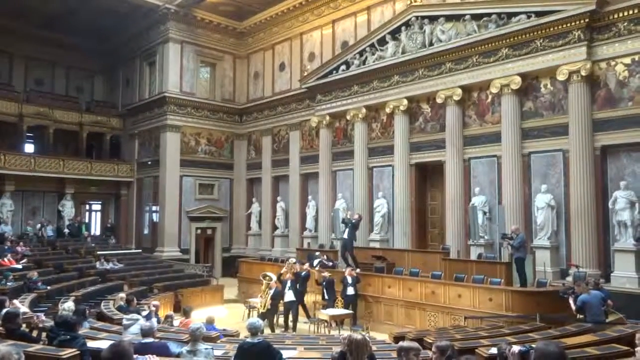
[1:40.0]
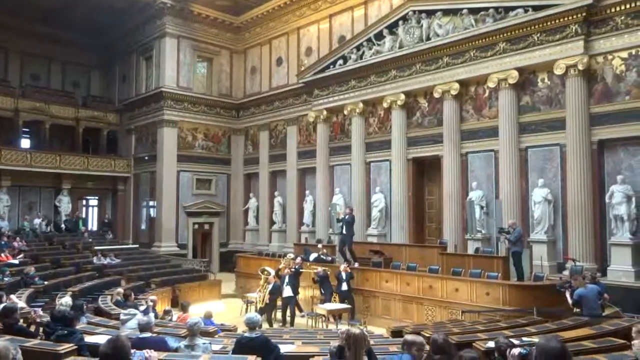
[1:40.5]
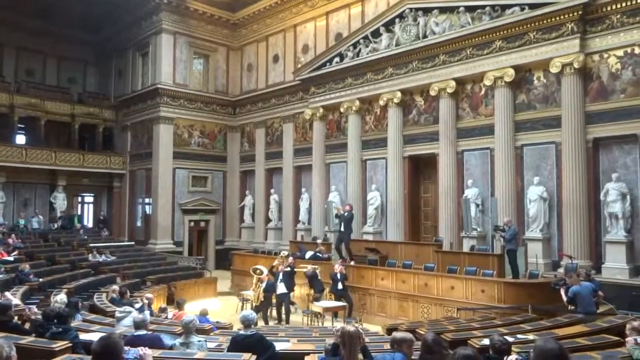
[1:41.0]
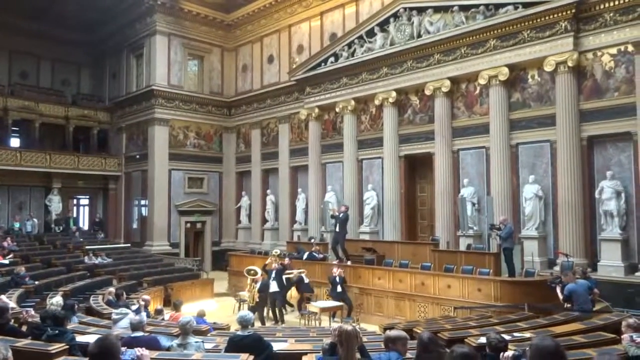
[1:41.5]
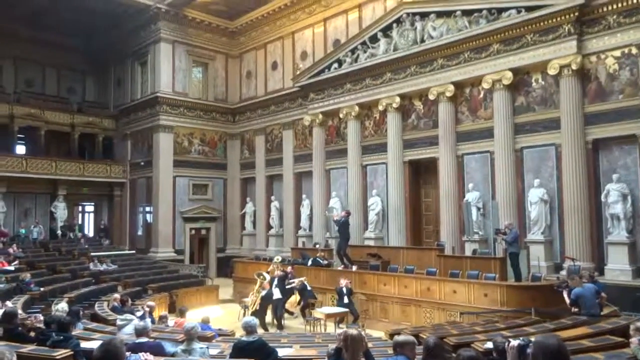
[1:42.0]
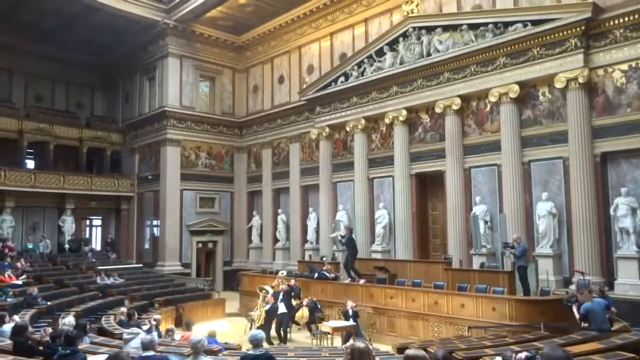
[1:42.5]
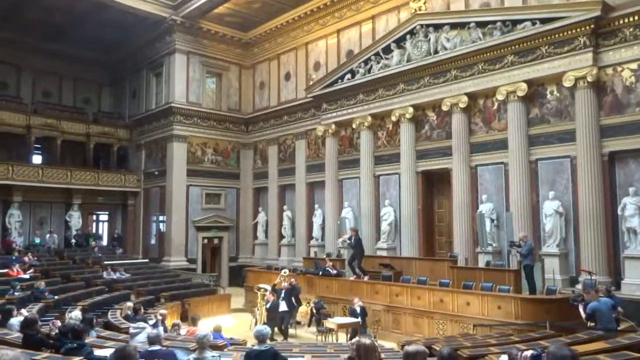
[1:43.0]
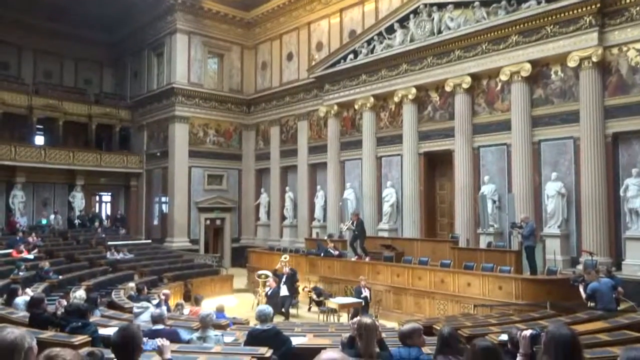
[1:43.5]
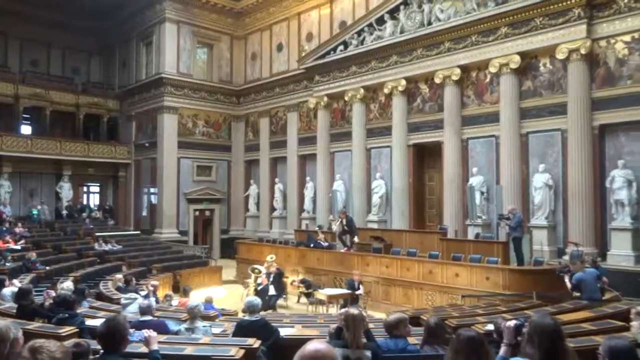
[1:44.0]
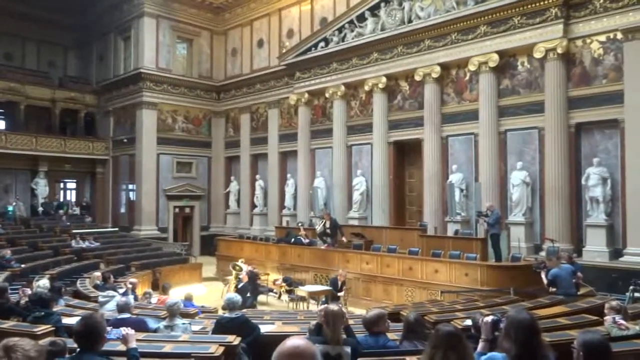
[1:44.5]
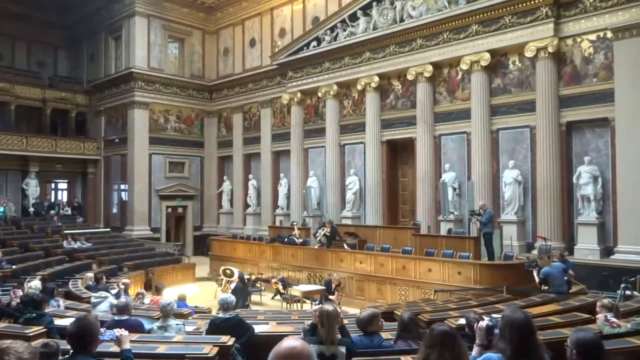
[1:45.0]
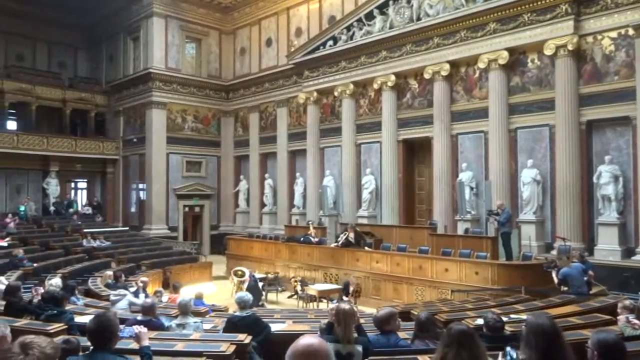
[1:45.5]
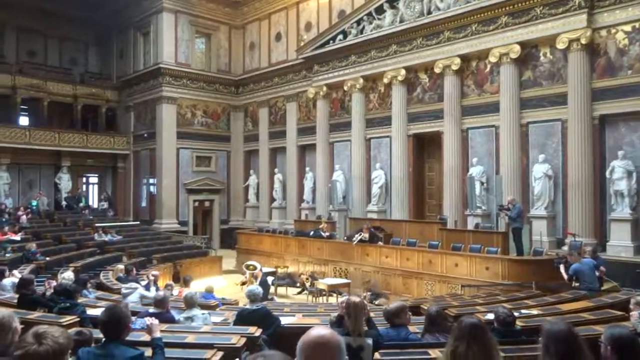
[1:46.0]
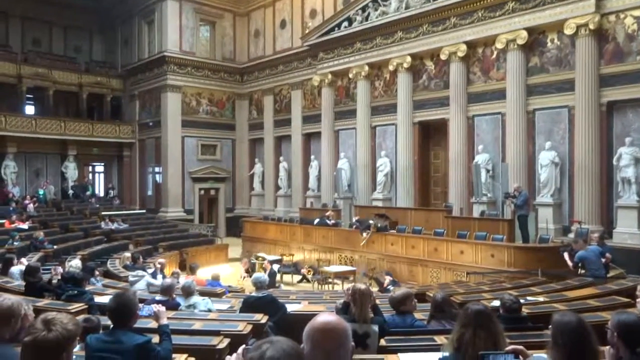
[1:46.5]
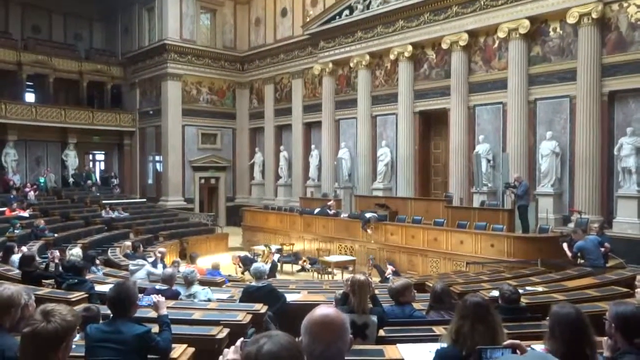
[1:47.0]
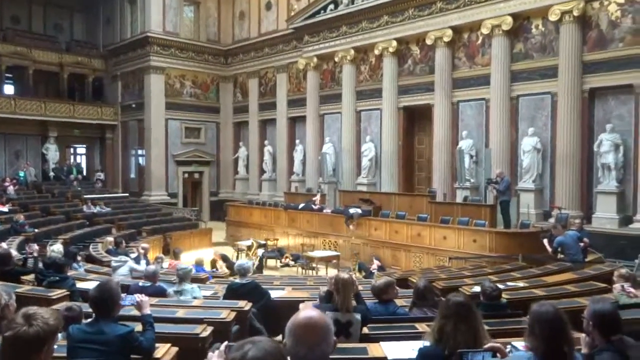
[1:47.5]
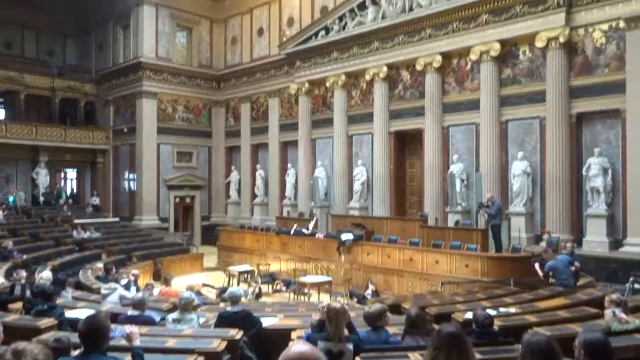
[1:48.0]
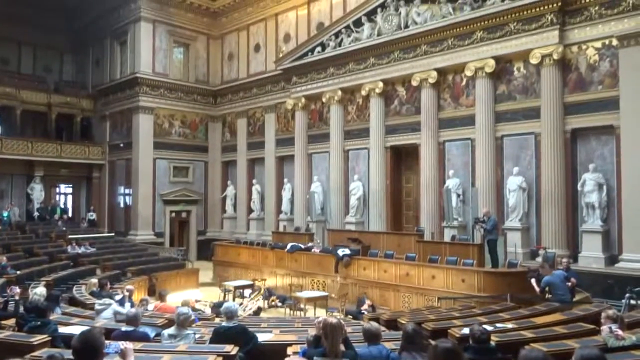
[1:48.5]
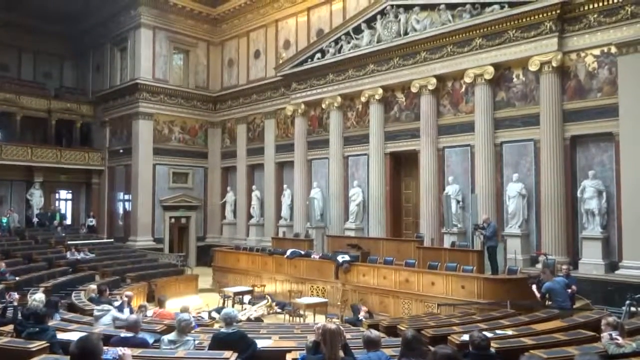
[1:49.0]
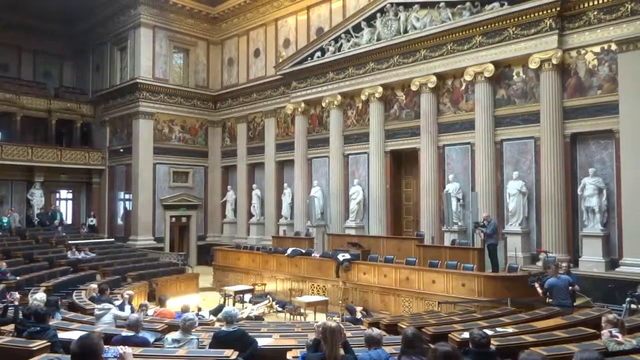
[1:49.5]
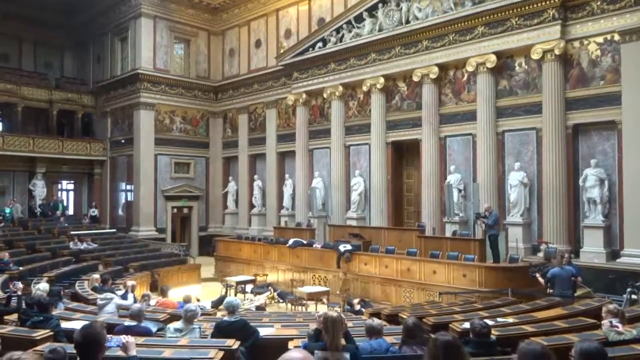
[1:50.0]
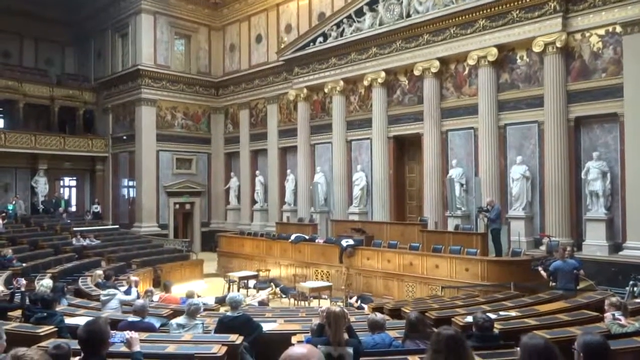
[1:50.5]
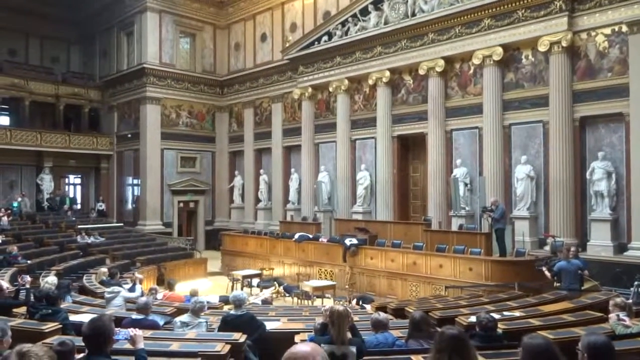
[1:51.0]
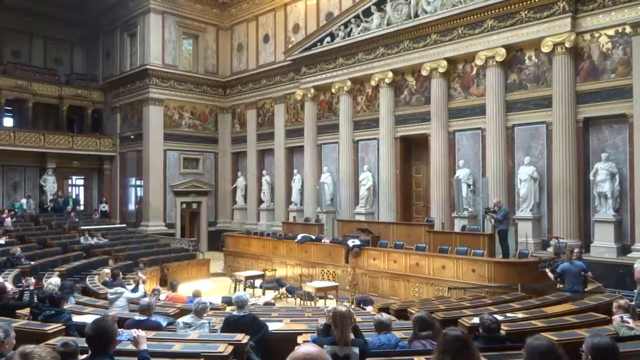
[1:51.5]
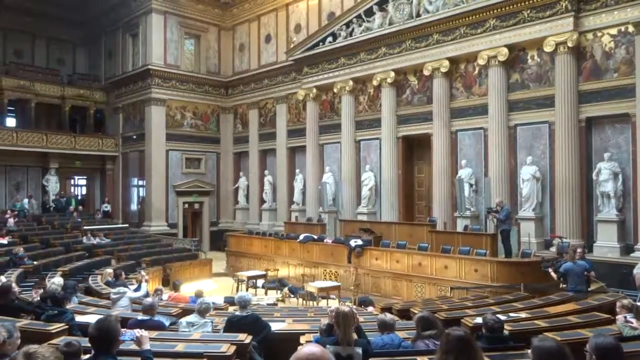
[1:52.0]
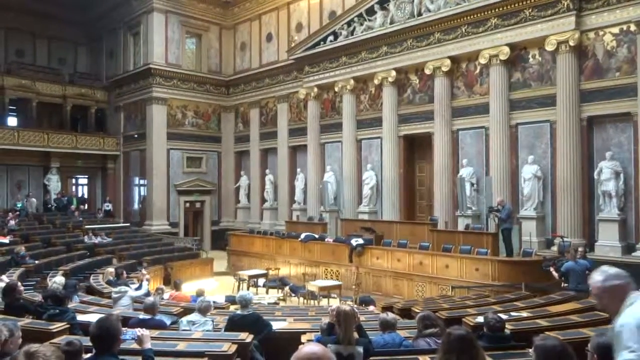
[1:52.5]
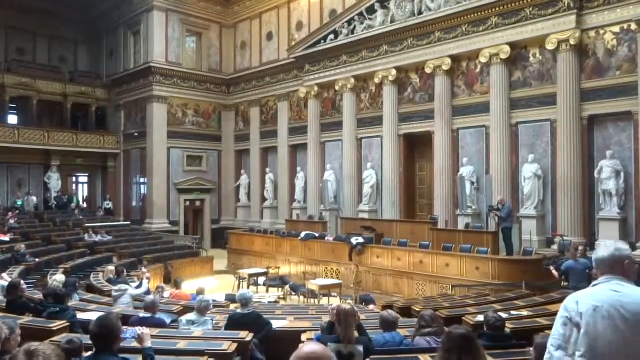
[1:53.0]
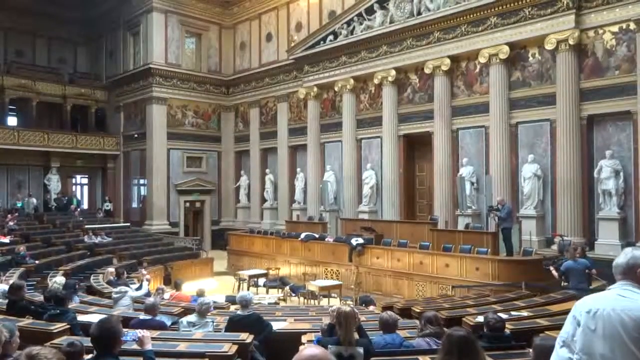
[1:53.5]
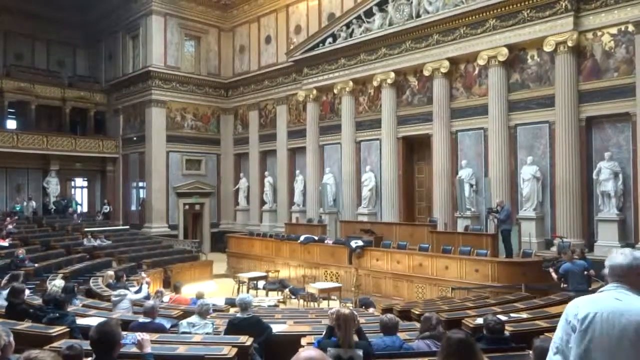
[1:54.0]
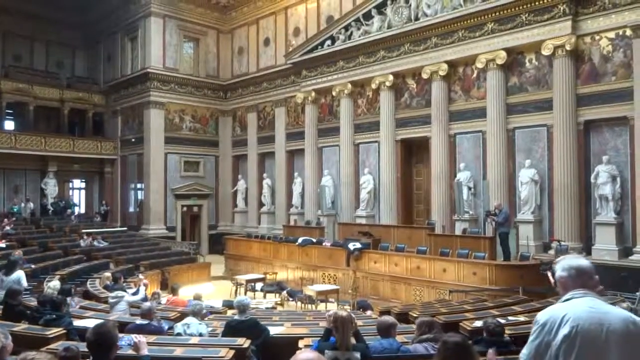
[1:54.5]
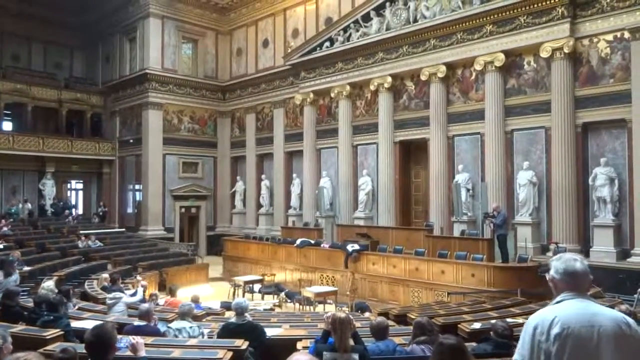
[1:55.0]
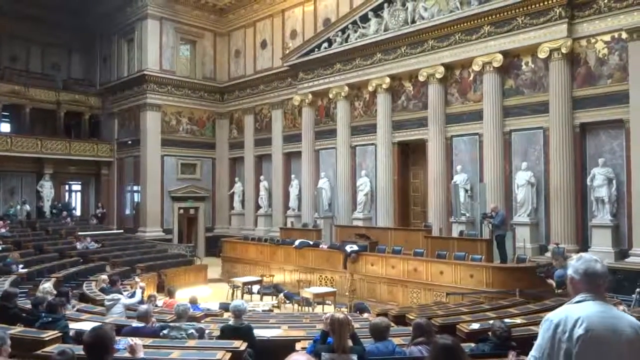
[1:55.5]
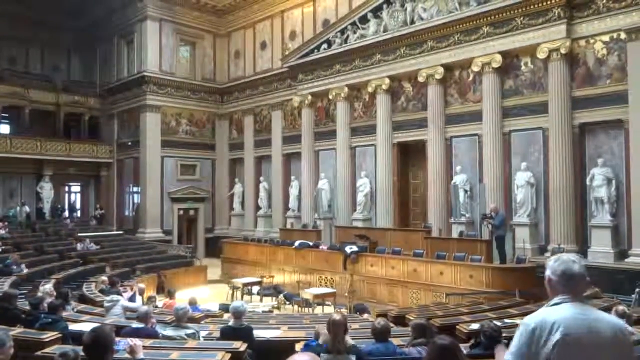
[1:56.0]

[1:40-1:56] The wide shot of the people blowing horns in the government building continues. The man on the right side with a camera is now standing on a chair as he videotapes. One man stands on the edge of the wooden podium, back arched and horn up as he blows it. The other person sits to his left, and in front of him the five people wander around blowing their horns. People in the crowd seem to be walking back and forth. One person makes their way toward the door in the top left but stops. The players slowly and dramatically start collapsing, then all fall down in dramatic fashion and lie there. A man with gray hair in a light blue shirt comes in from the bottom right corner, his back and the back of his head visible; he looks back to the right a little and then walks over a little more. A couple of people in the crowd clap, but not many; everybody is mostly just looking at the men.